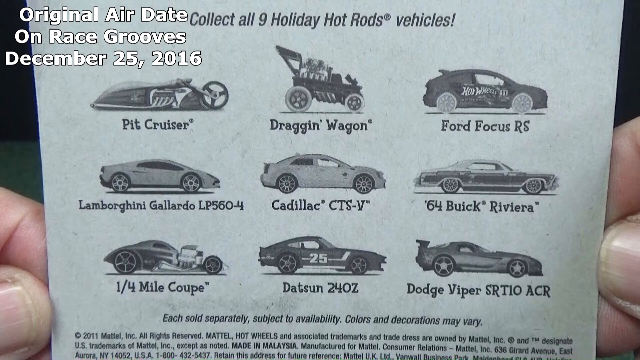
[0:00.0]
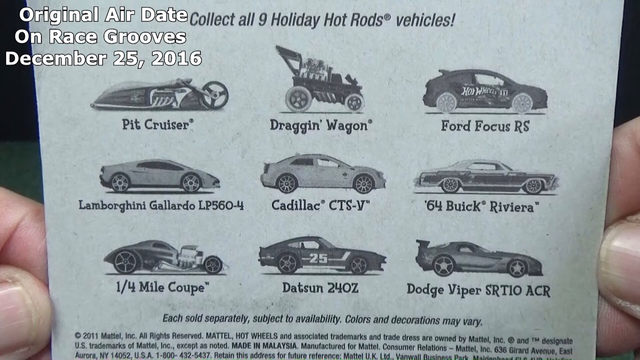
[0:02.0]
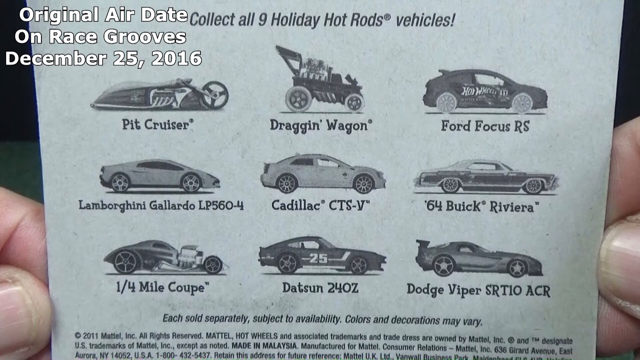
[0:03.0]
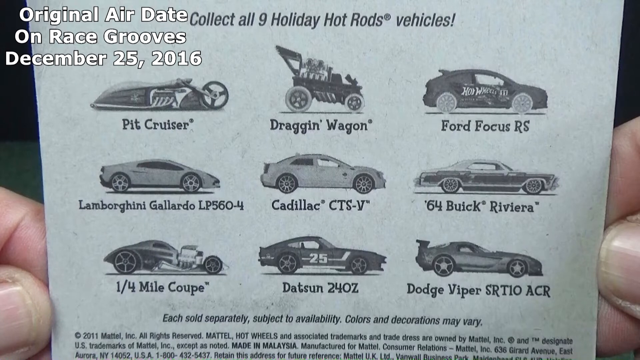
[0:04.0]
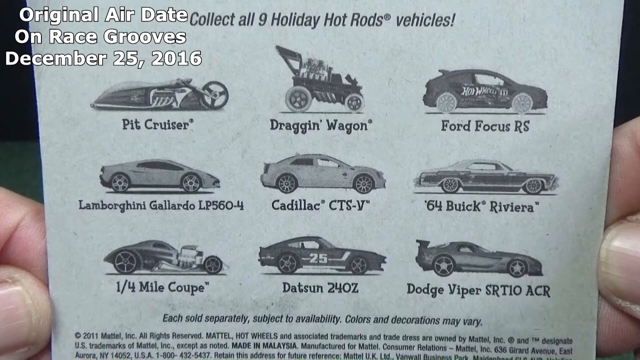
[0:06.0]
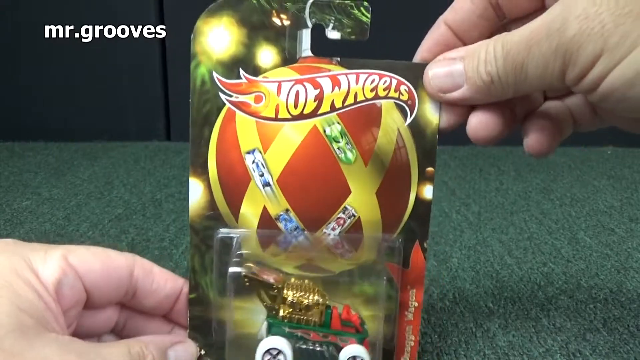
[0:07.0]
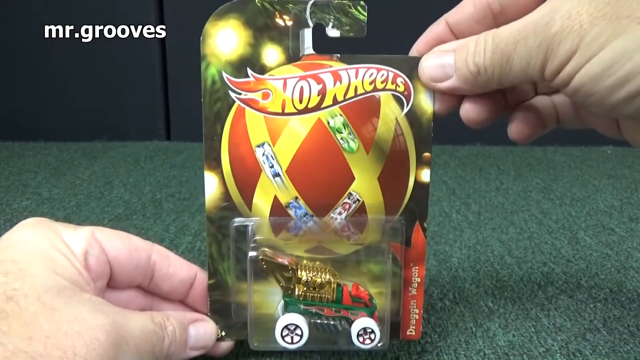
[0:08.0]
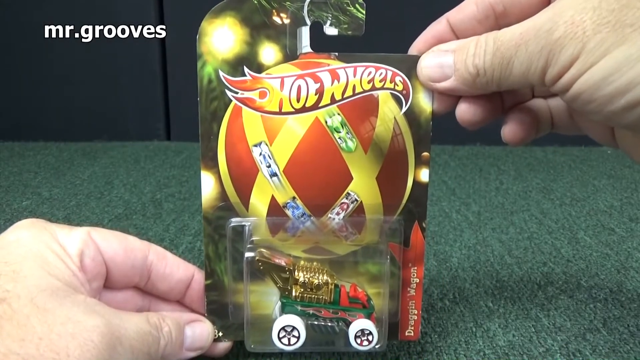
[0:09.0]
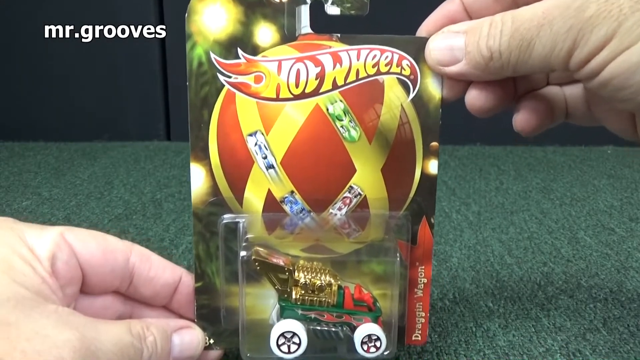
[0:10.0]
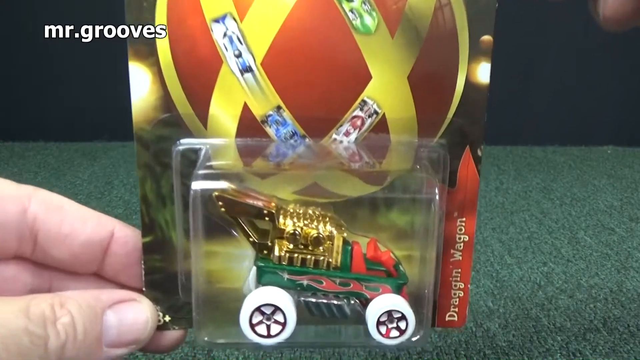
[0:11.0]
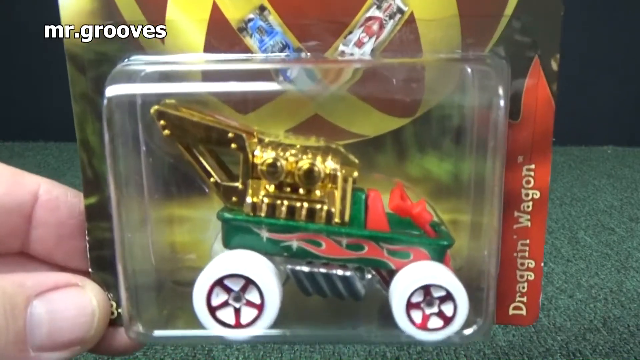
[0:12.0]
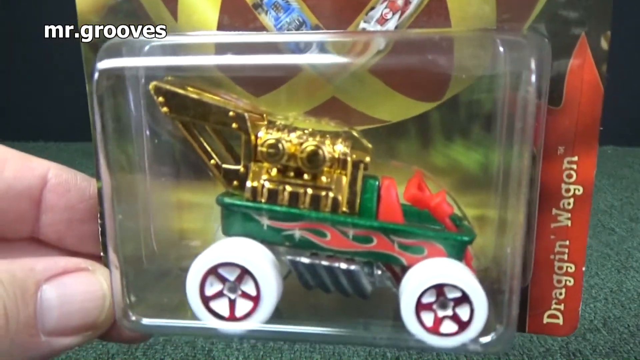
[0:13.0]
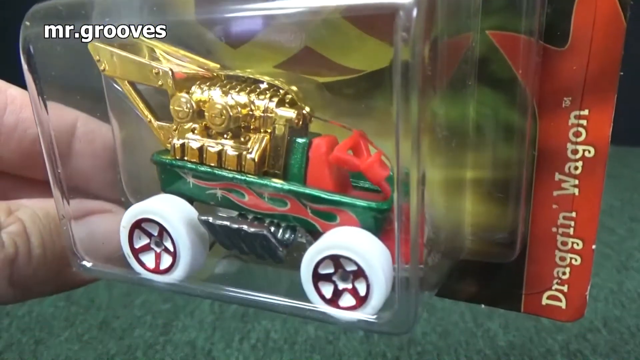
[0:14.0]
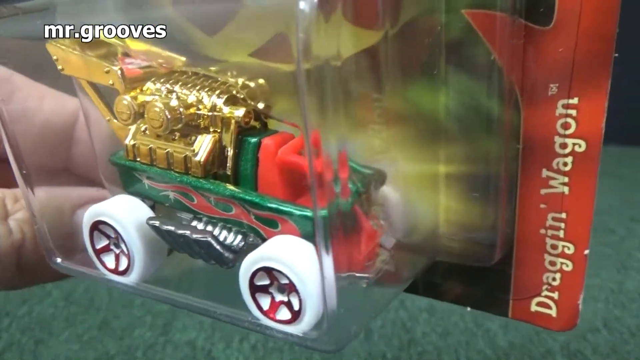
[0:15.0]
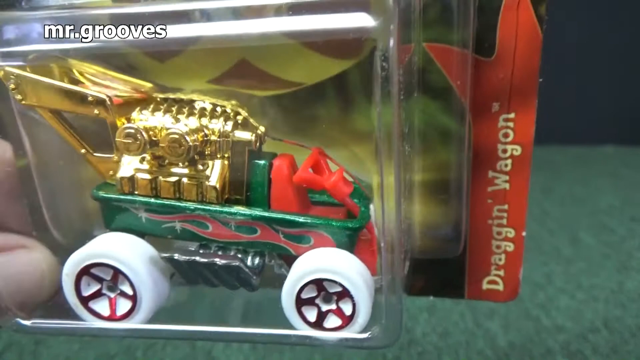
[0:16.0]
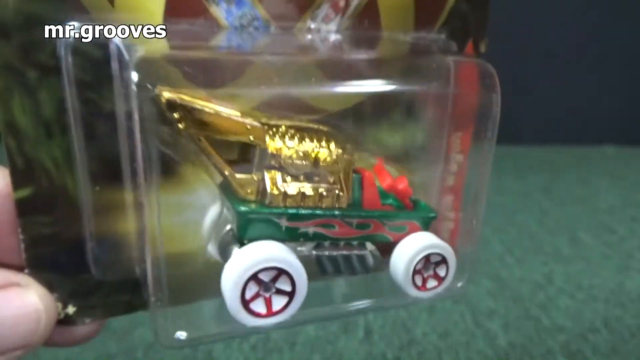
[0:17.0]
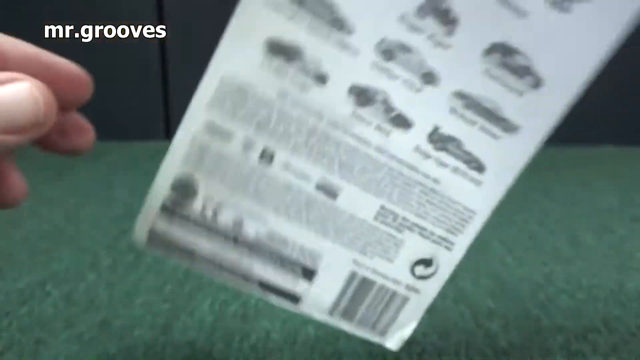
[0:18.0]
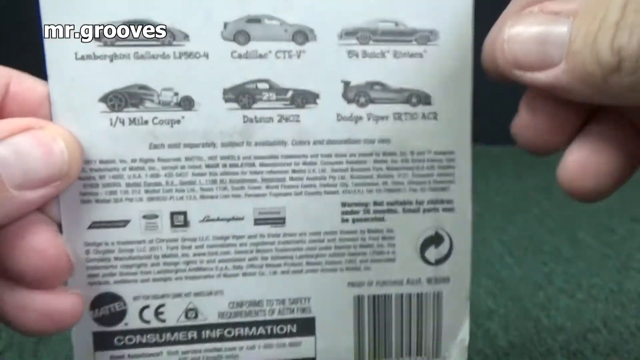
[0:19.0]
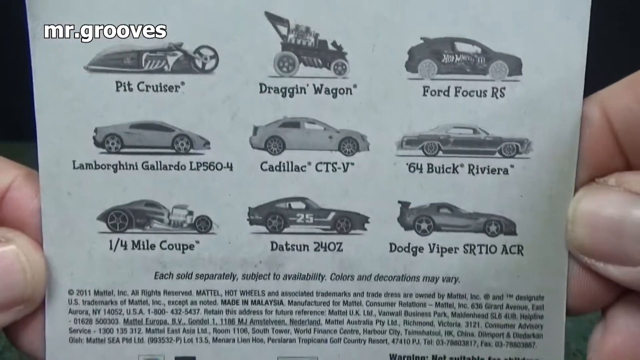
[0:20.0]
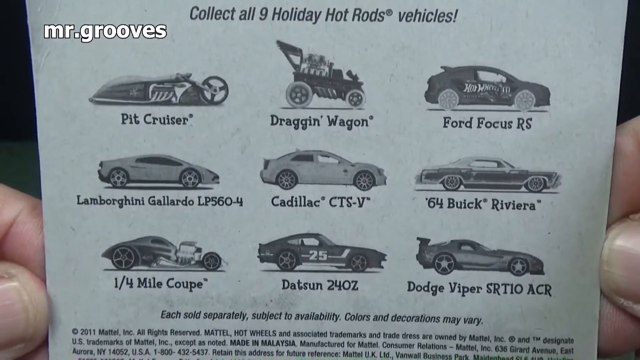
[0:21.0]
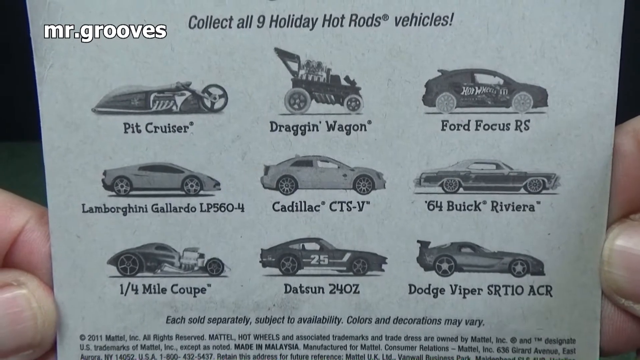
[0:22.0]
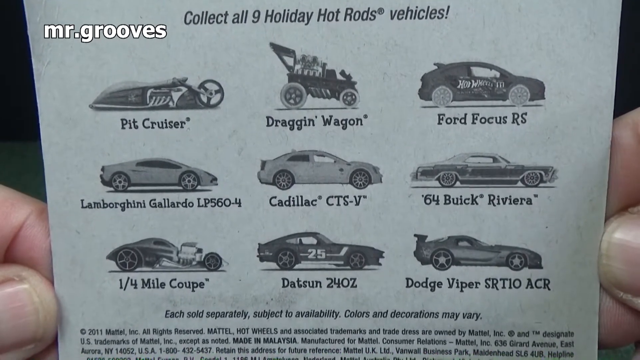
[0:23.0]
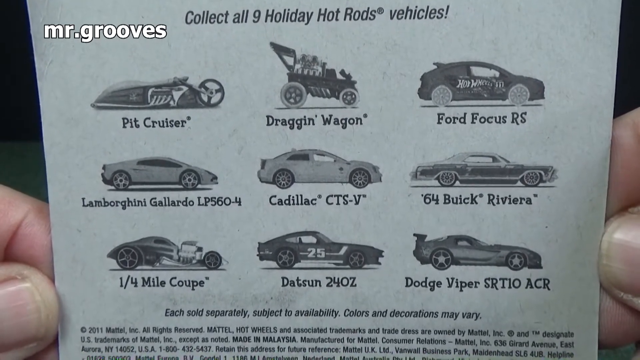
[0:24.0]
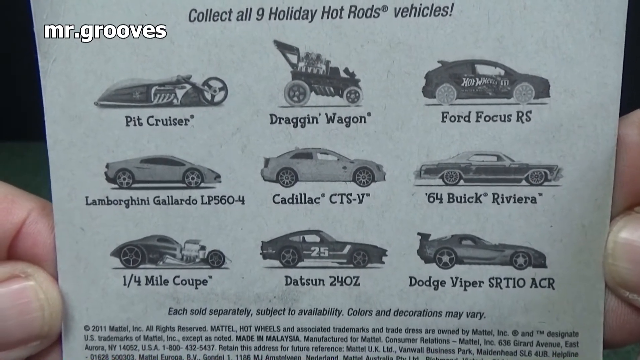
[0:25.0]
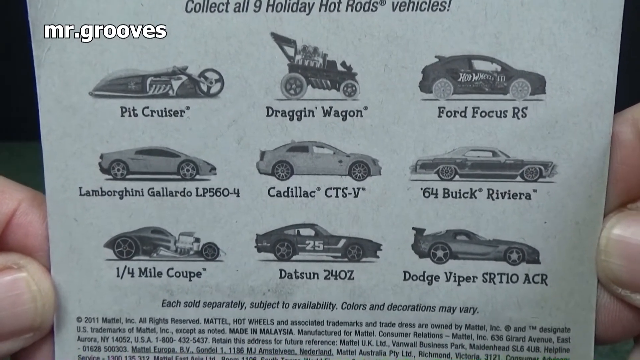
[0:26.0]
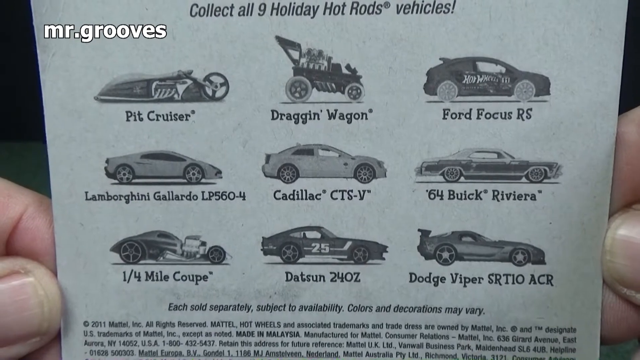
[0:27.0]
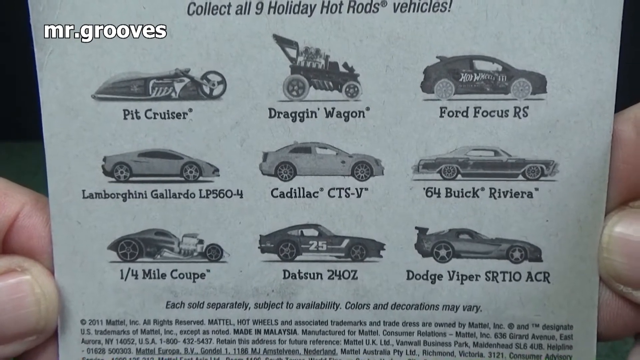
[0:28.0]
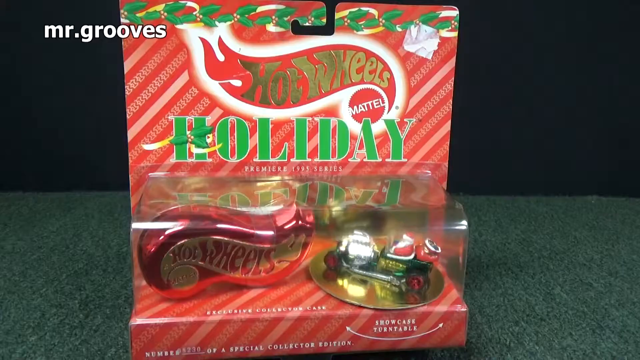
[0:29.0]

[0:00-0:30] The video starts with a paper that has text at the top in the center about collecting holiday vehicles. Below it is a picture of nine different vehicles, starting from the top left, grouped in three rows with three cars in each row. The paper includes a copyright notice, and a note at the bottom states that "each vehicle is sold separately and are subject to availability. Color and decoration may vary." The paper looks like it is held by two hands, which show at the sides. Text over the paper in a top corner says "original air date on Race Grooves December 25, 2016." Next, a Hot Wheels toy car in its packaging is displayed. The car is in a clear plastic package with a red and yellow Hot Wheels logo on the top, and the car itself is green with red and gold details. The packaging has a red and yellow pattern design on the top part around the logo. A red banner on the bottom right of the package has text that says "Dragon Wagon," apparently the name of the car.